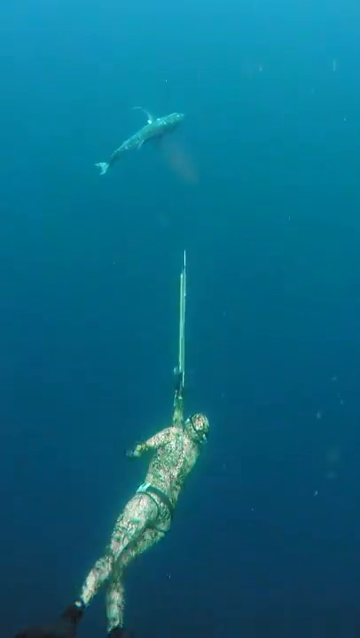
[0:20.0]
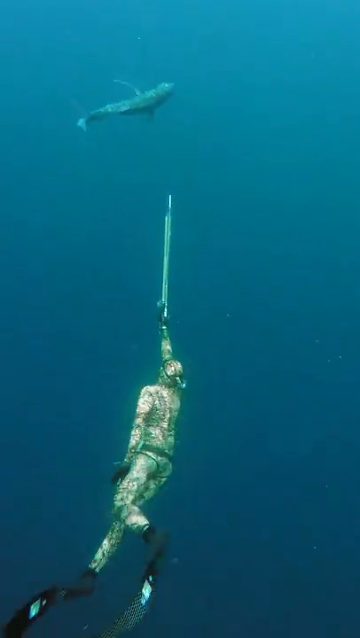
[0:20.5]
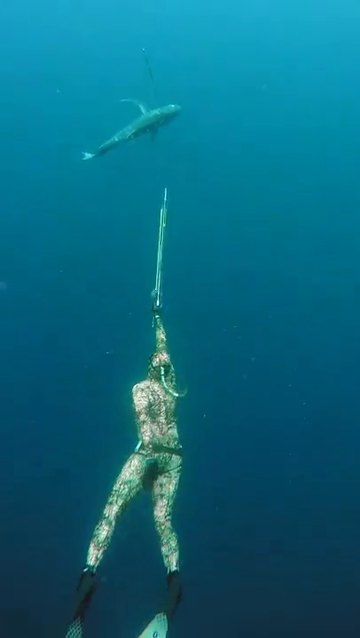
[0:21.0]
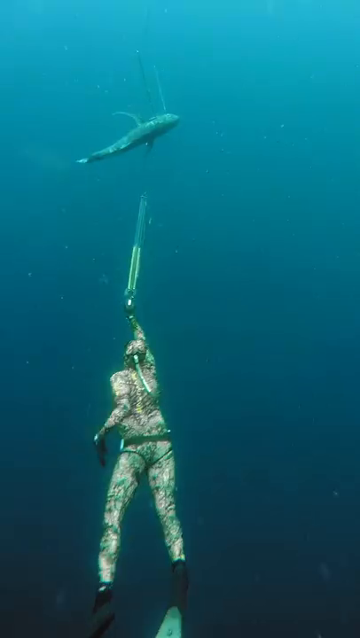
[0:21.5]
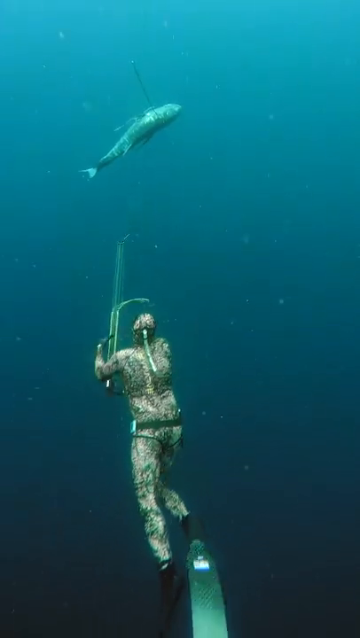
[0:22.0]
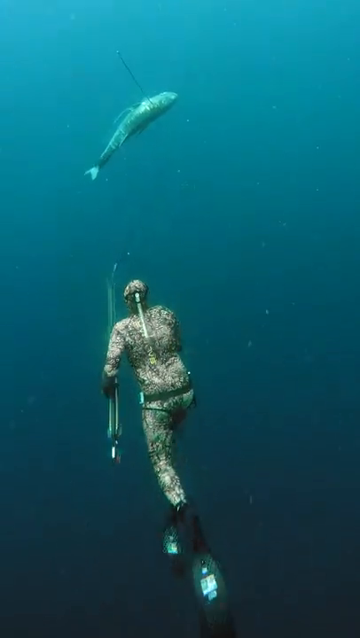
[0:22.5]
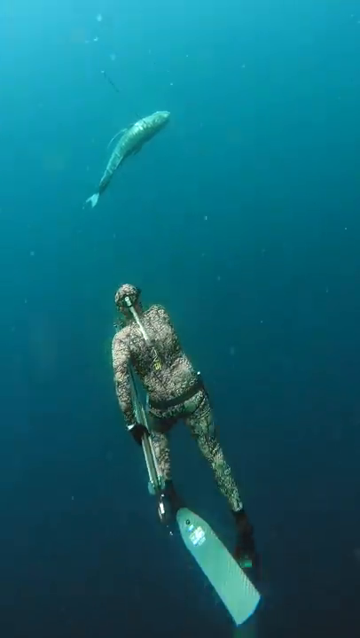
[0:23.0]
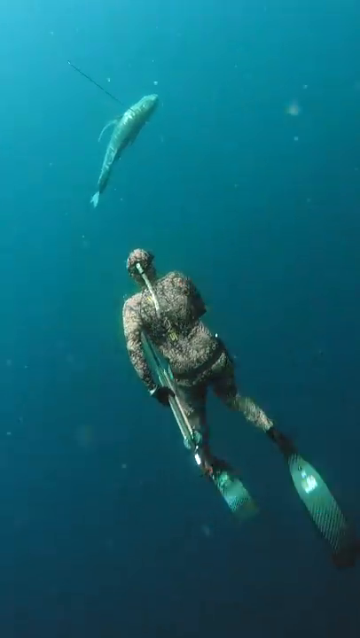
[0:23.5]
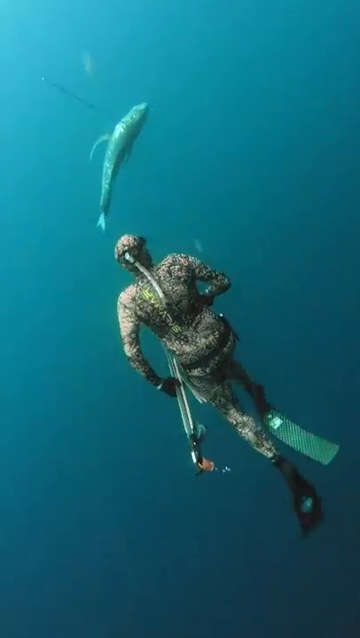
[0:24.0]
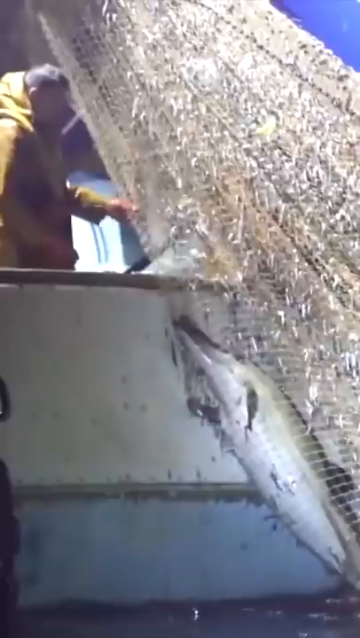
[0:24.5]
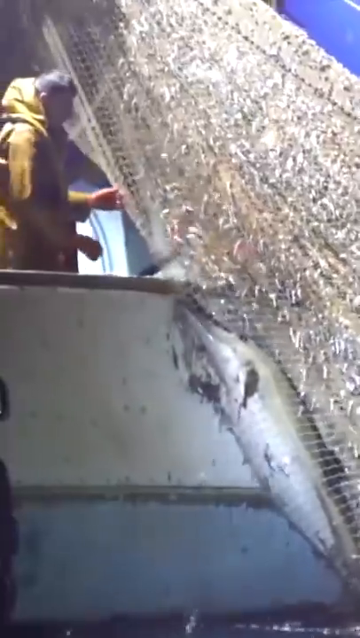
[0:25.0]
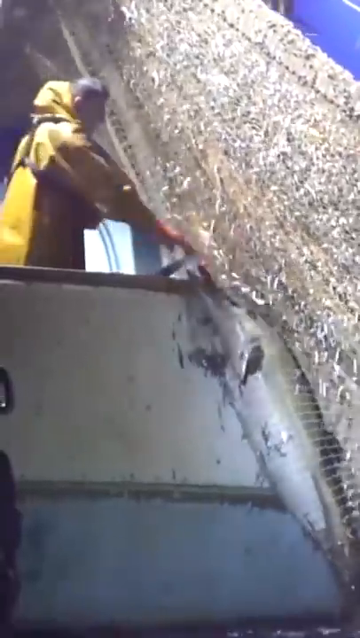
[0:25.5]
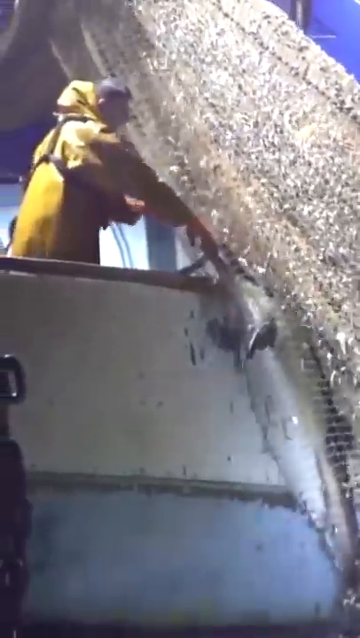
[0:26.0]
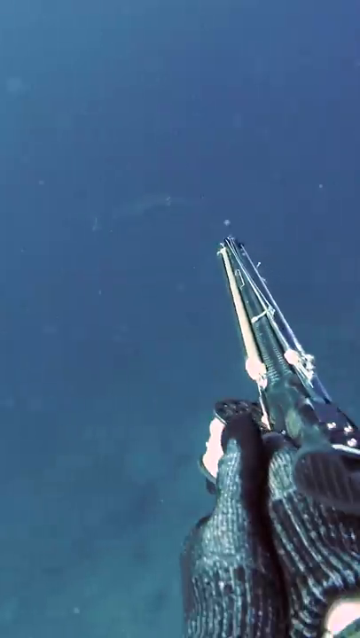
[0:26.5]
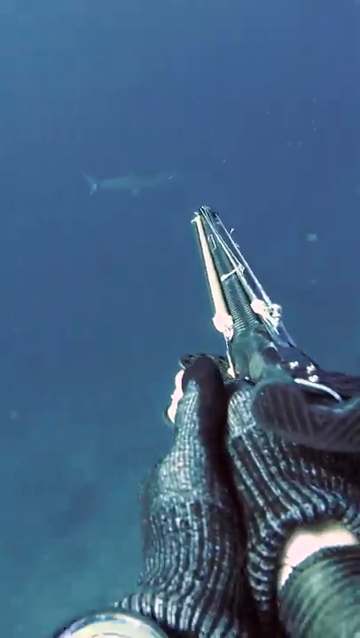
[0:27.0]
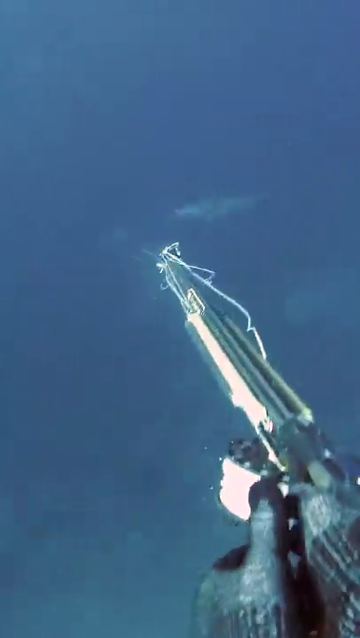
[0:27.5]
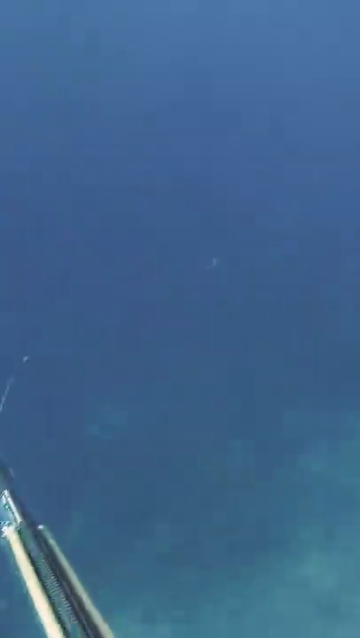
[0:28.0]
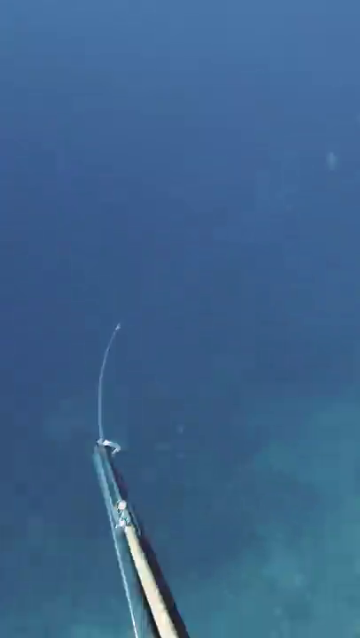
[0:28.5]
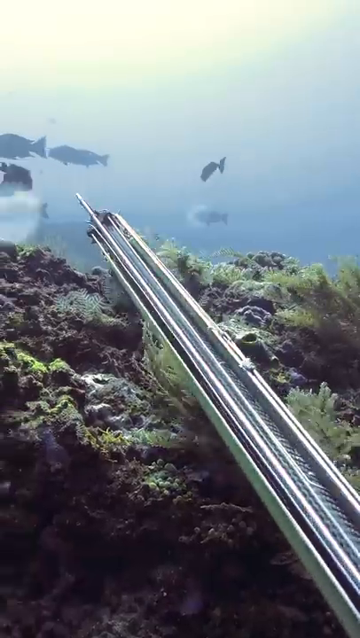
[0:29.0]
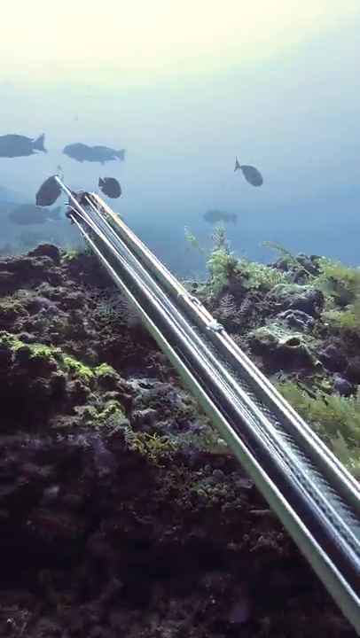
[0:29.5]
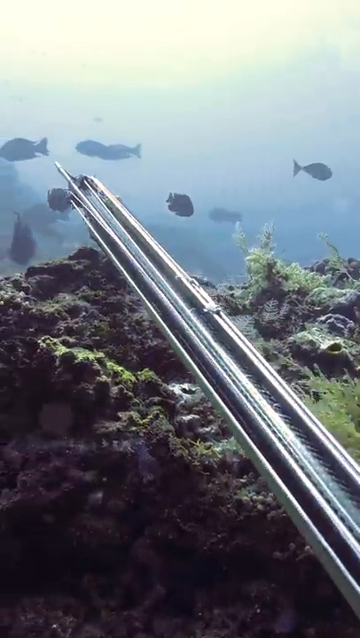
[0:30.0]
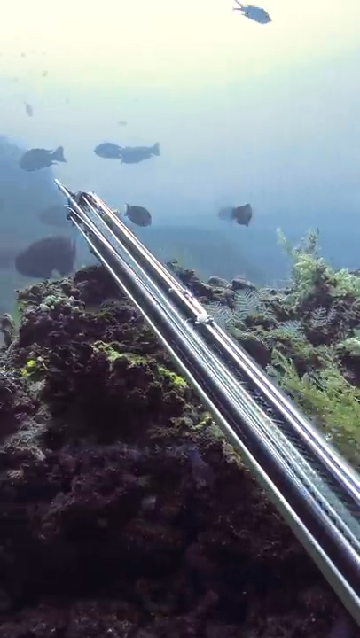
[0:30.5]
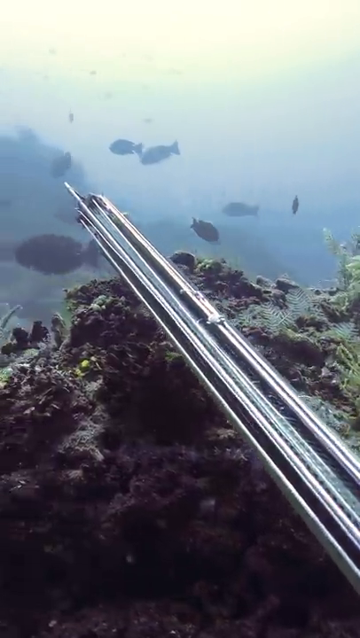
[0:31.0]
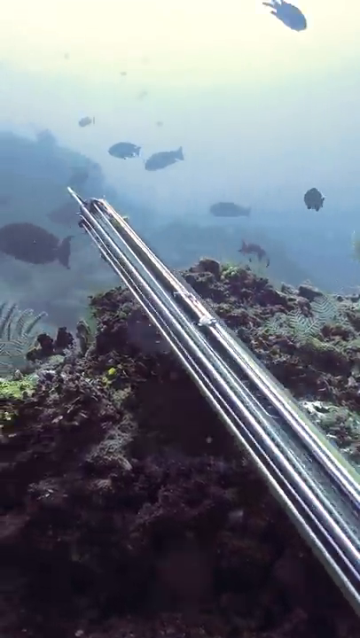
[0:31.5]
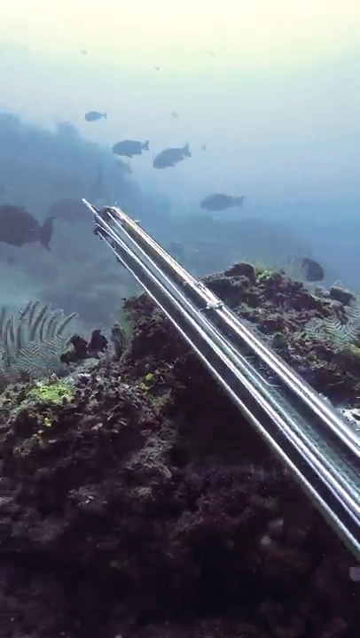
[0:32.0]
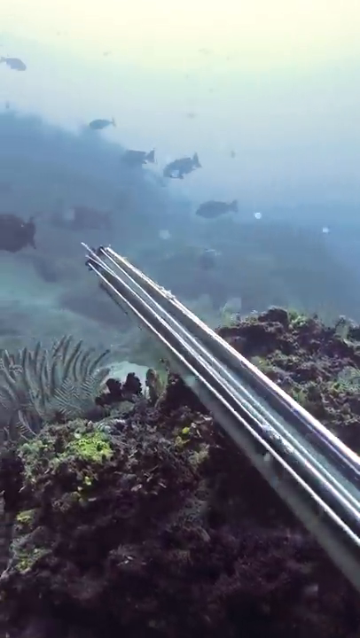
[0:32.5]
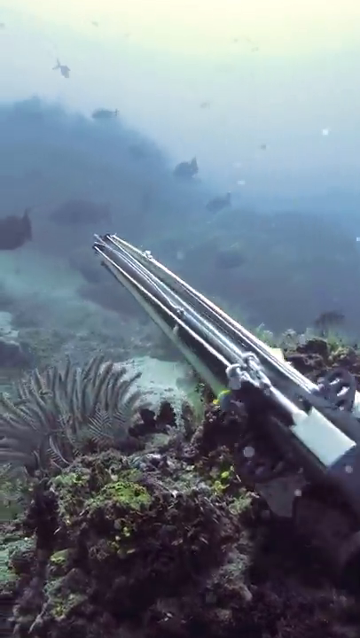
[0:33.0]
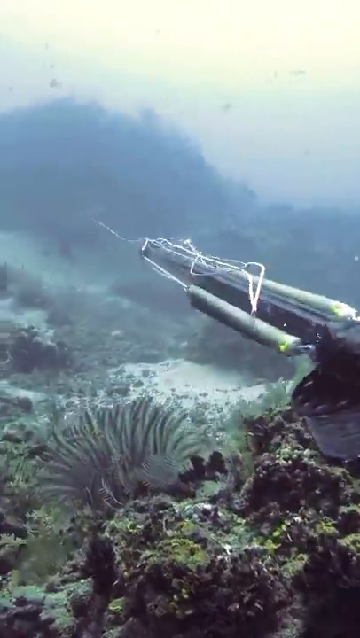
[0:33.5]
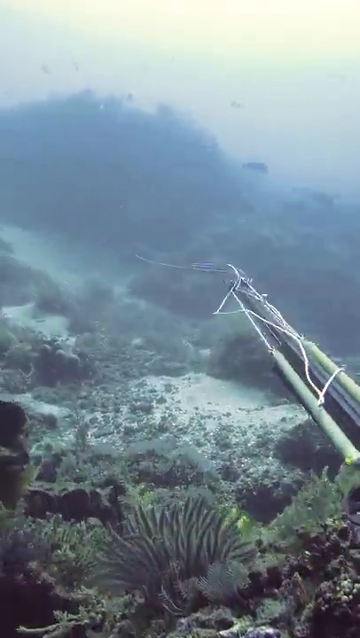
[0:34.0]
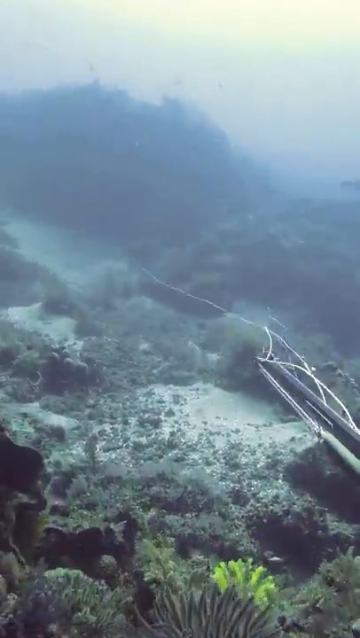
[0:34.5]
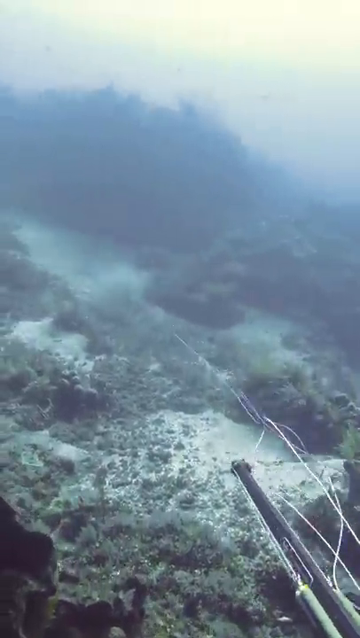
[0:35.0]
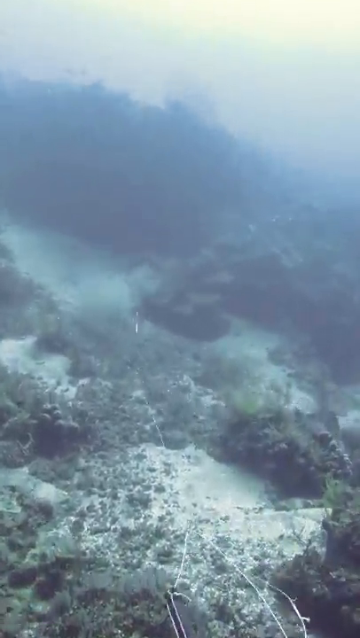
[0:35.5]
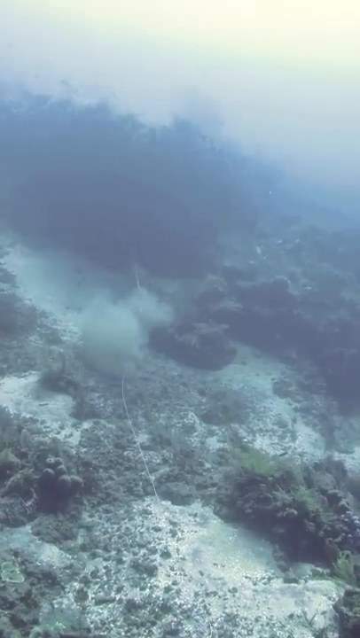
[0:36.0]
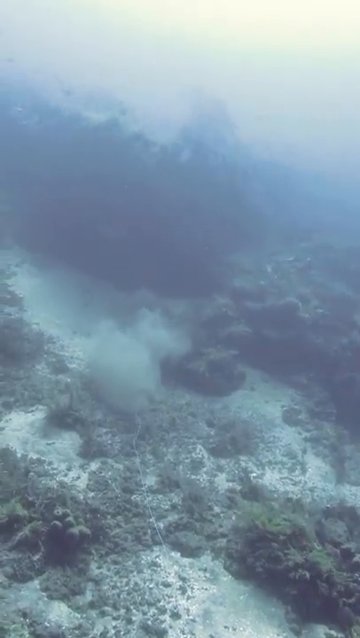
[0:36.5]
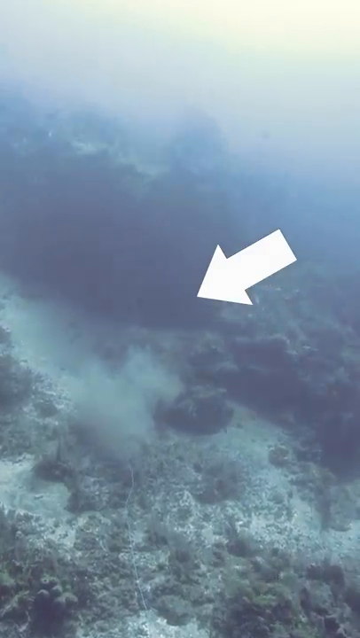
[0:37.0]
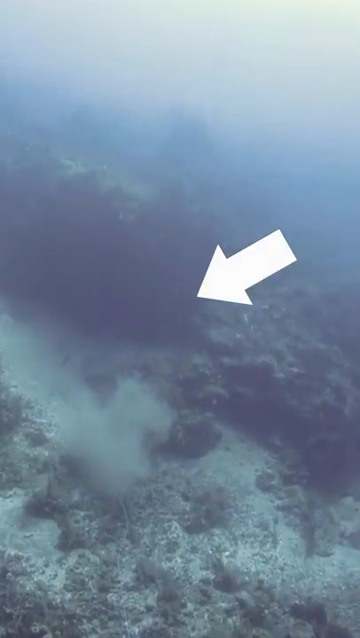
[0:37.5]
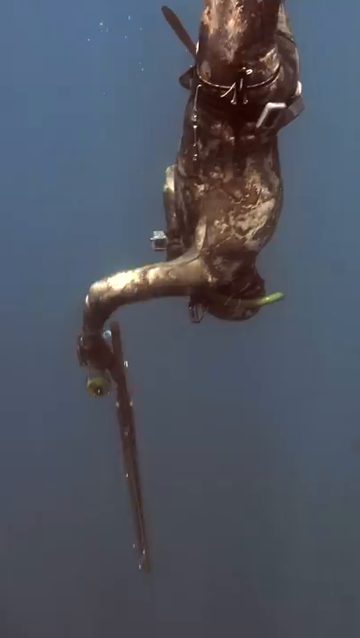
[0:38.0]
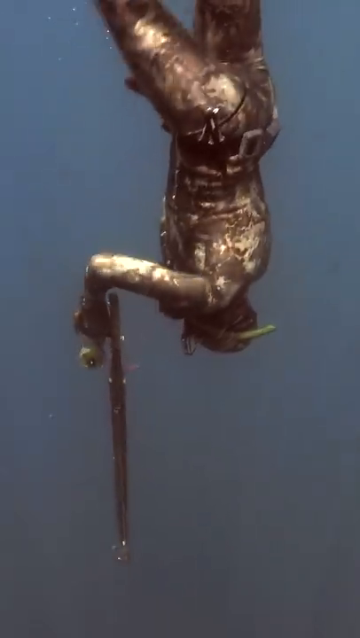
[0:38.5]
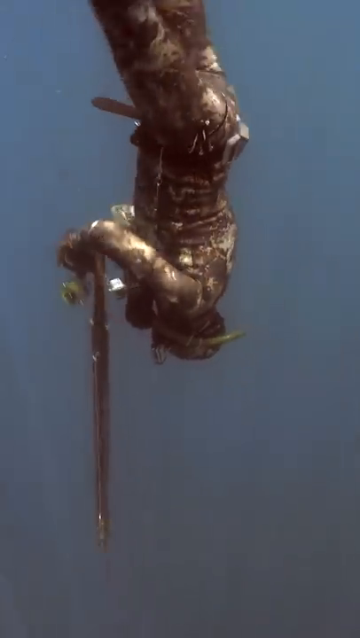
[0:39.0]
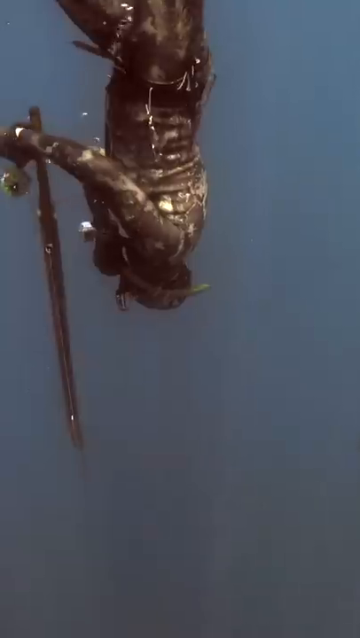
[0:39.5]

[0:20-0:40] The footage is no longer first-person; somebody else is filming. It is still in portrait mode and still underwater, but the bottom of the ocean is no longer visible, just blue water. A diver in a bright yellow and black wetsuit is fully extended, almost as if standing, with his spear gun extended and pointing up toward the top of the image. A very large fish is above him; the distance is hard to judge, but it appears to be several feet above him at the top of the image. He gets even closer to it, shoots the spear gun, and spears the fish through its body, roughly behind its head. The fish appears to die immediately: it stops moving and just floats. The footage cuts to what looks like a fishing boat with people pulling in fishing nets. Another point-of-view shot shows the diver spearing, or at least attempting to spear, more fish, and the result is not always shown.